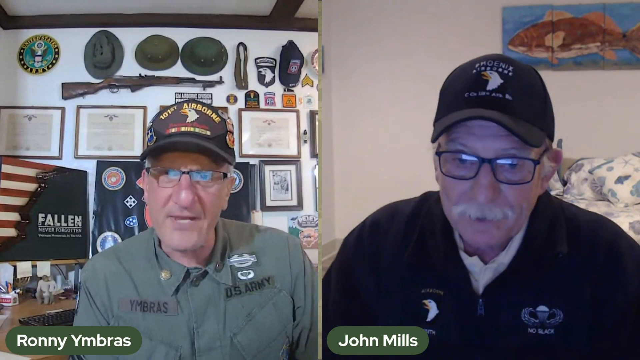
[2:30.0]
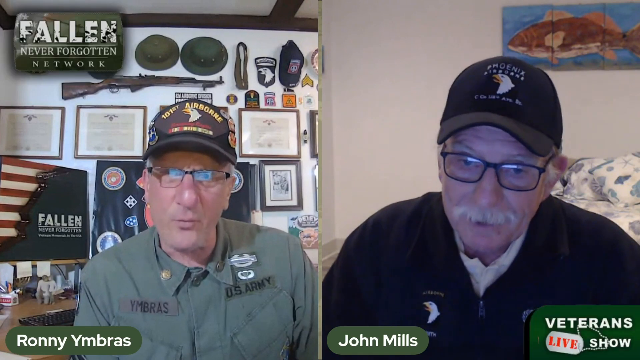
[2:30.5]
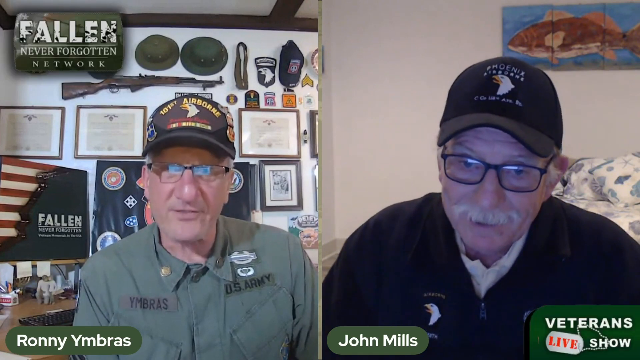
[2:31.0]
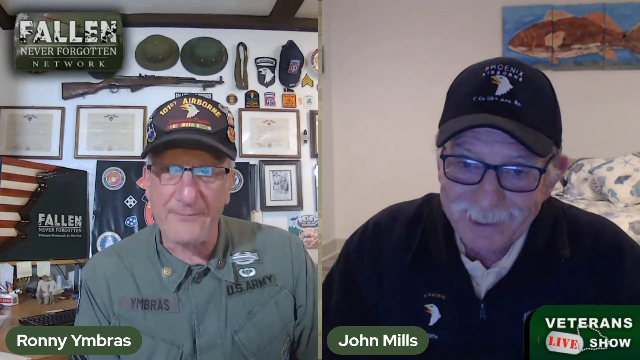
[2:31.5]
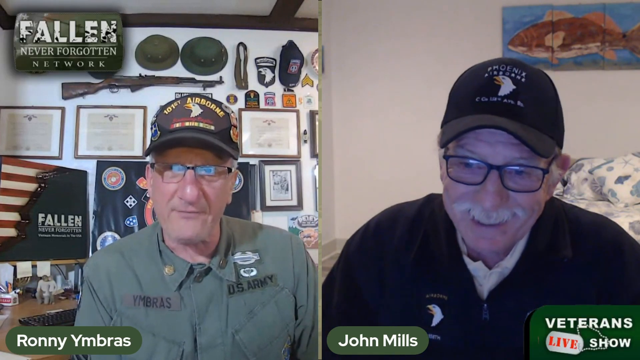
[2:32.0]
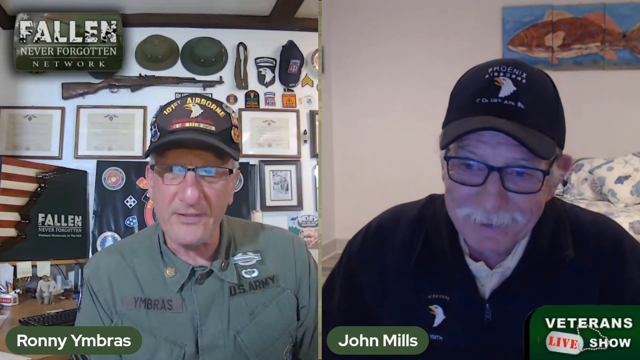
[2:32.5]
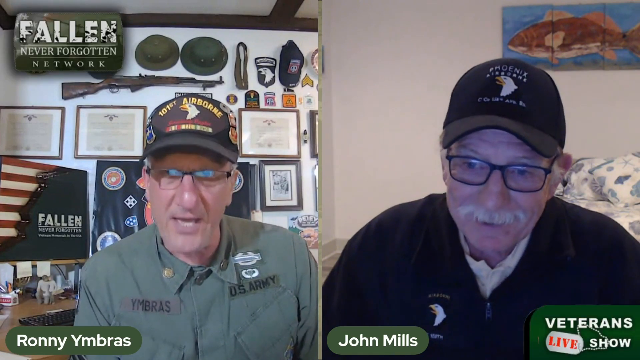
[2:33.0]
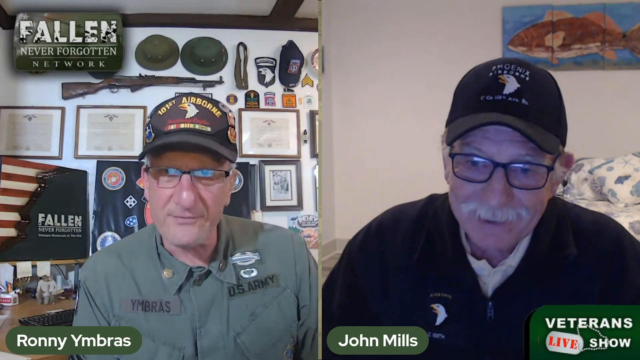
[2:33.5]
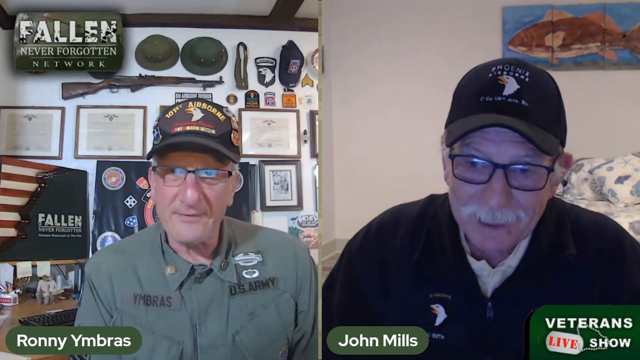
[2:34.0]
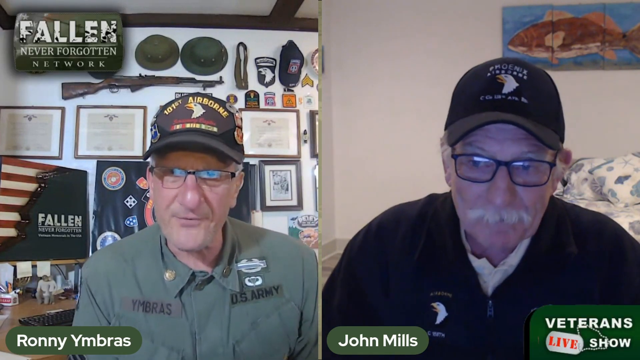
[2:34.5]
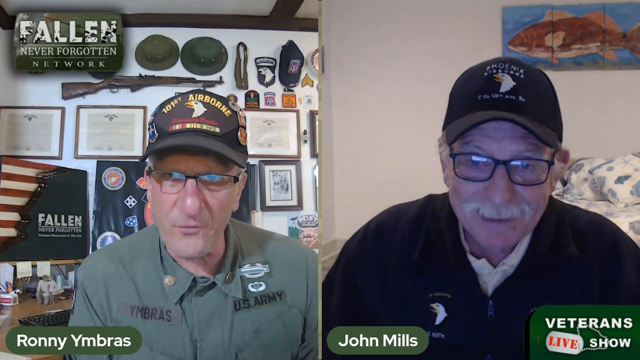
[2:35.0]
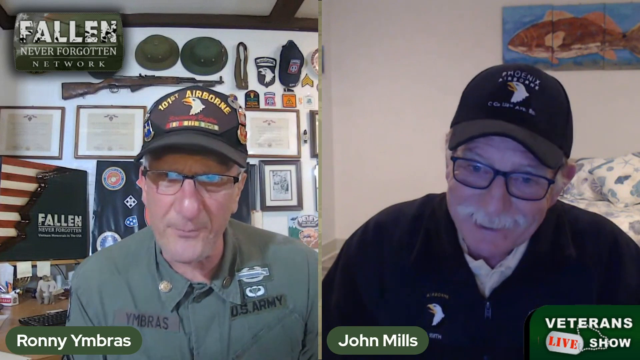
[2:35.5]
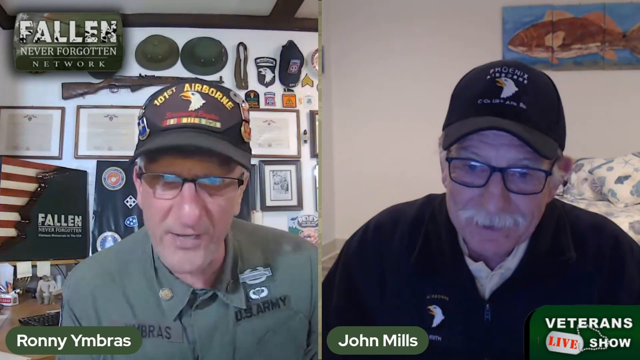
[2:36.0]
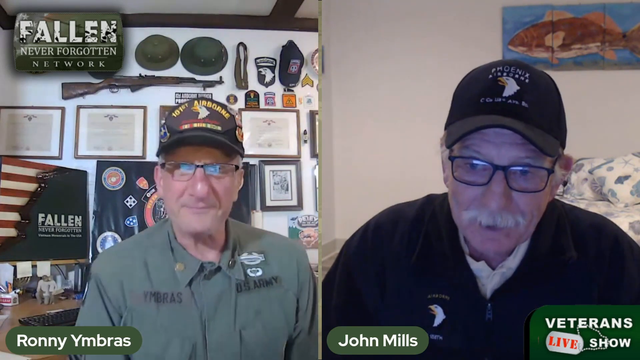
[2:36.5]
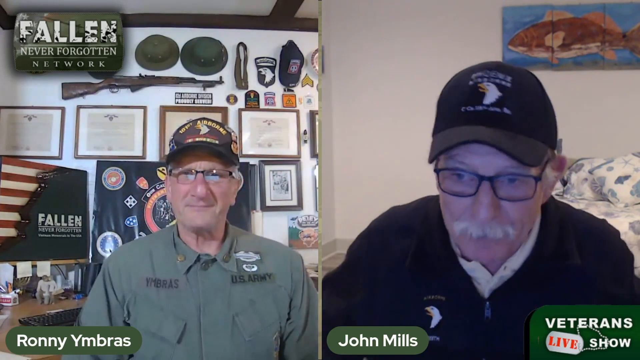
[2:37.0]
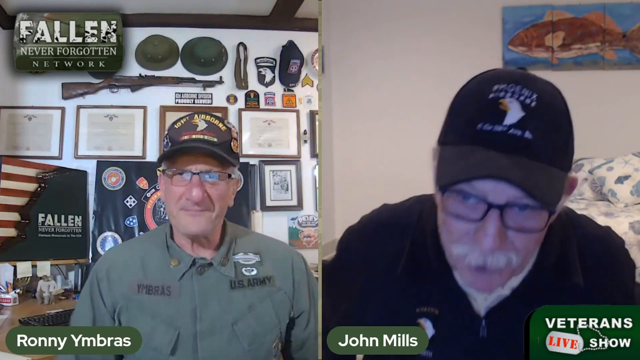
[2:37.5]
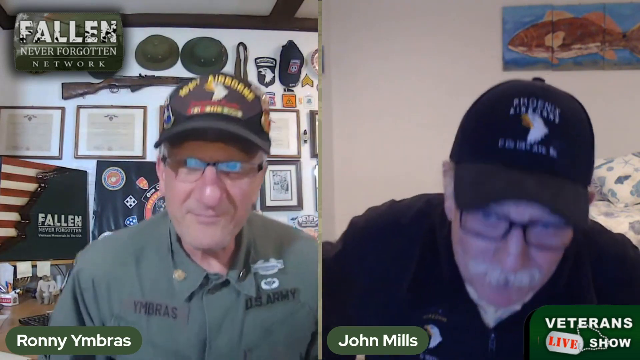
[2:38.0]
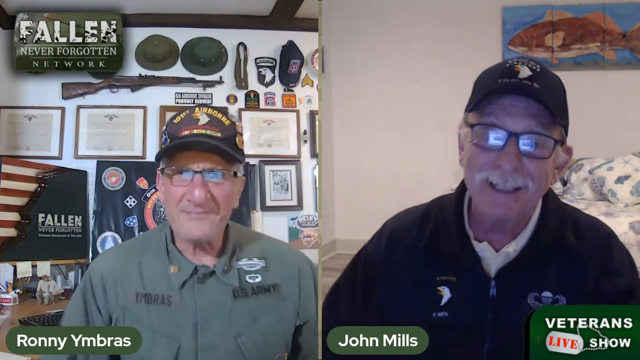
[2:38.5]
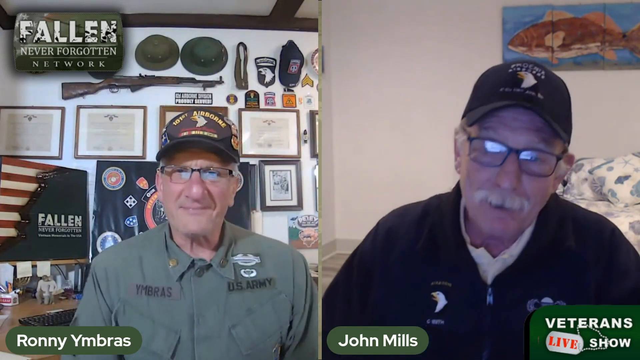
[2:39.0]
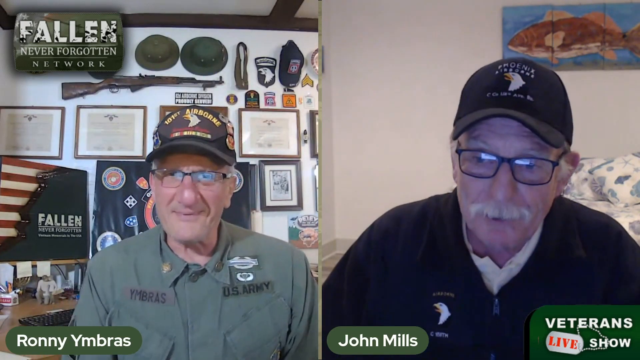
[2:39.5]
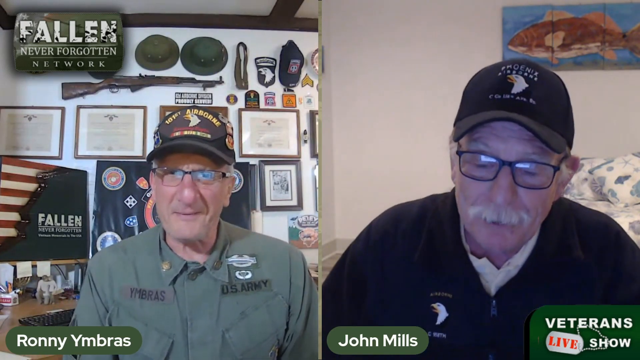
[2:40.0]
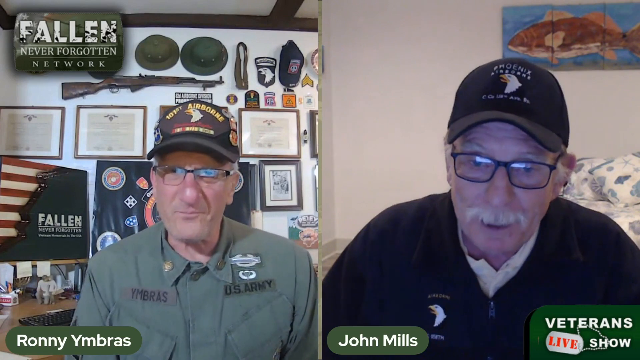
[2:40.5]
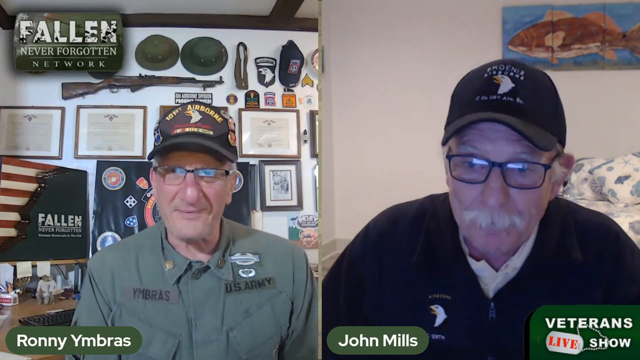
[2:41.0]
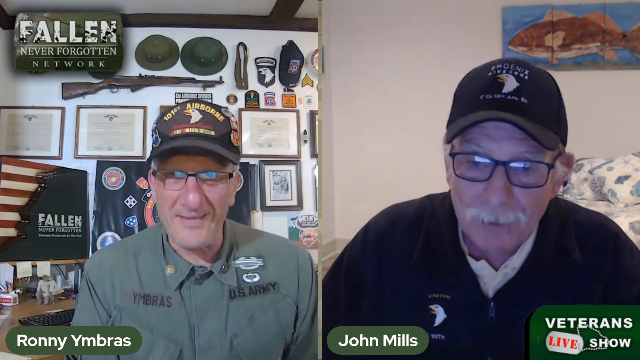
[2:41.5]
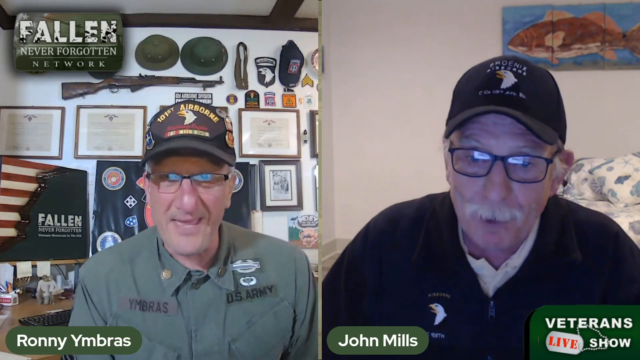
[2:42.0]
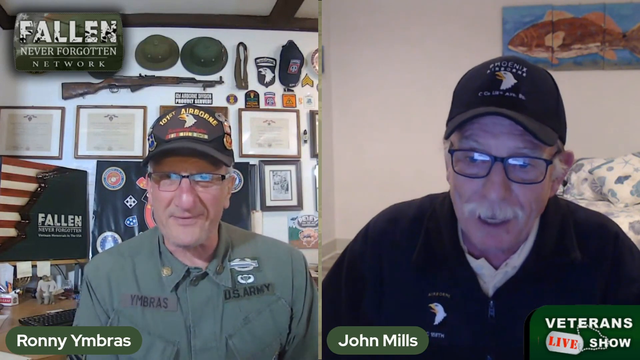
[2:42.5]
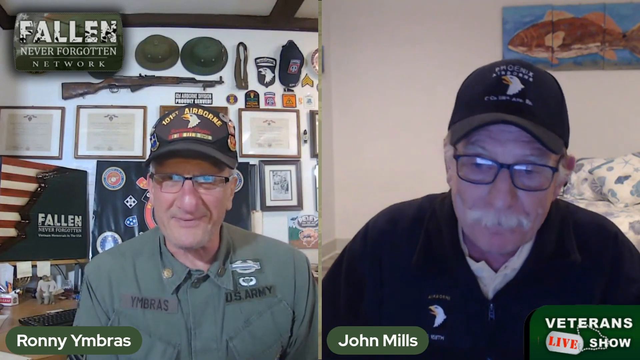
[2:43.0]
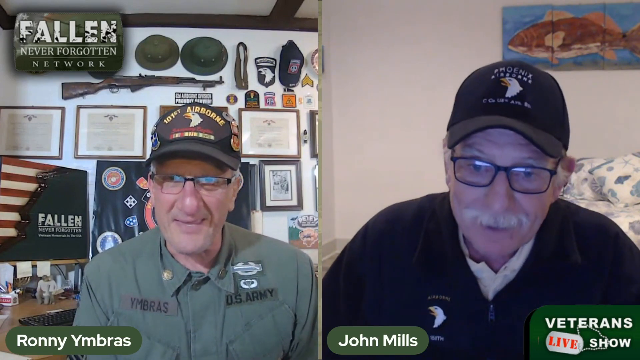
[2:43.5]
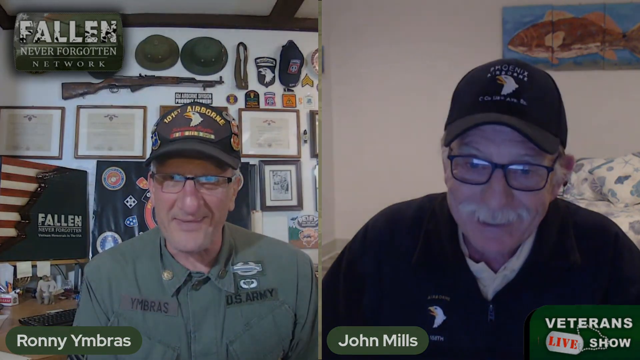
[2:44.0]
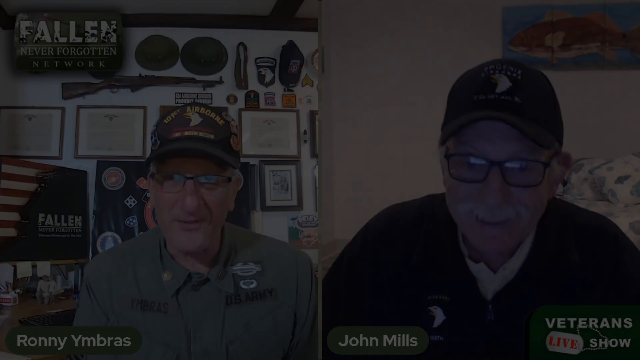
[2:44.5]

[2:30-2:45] A split screen shows Rani Yambras of the US Army on the left and John Mills on the right. The wall behind Rani has all kinds of things on it: hats, guns, certificates and medals. John Mills is also wearing a hat; both hats have bald eagles on them, though they apparently are not from the same group. John also has glasses, like Rani. Rani wears his army outfit and John a darker outfit; John has a white mustache. A three-frame picture of a fish is in the background of John's screen. The two talk back and forth, both moving forward a little and adjusting in their seats at the same time. Rani is smiling while John talks.